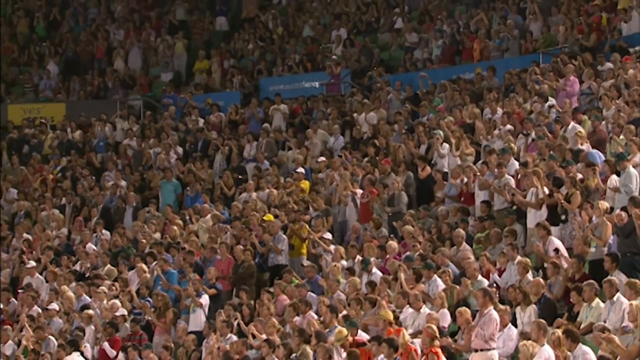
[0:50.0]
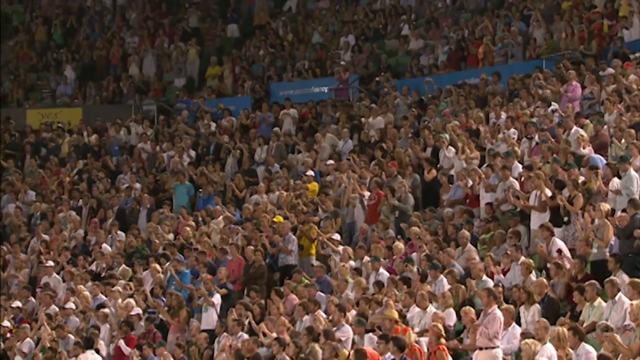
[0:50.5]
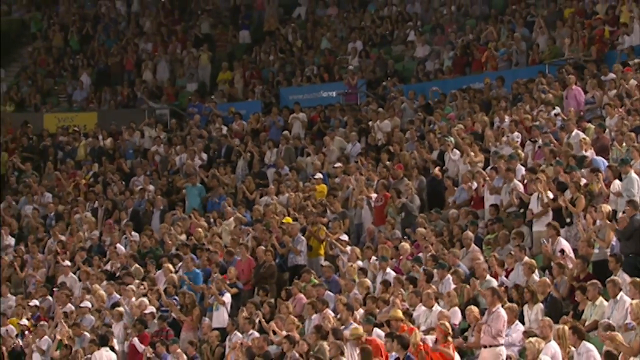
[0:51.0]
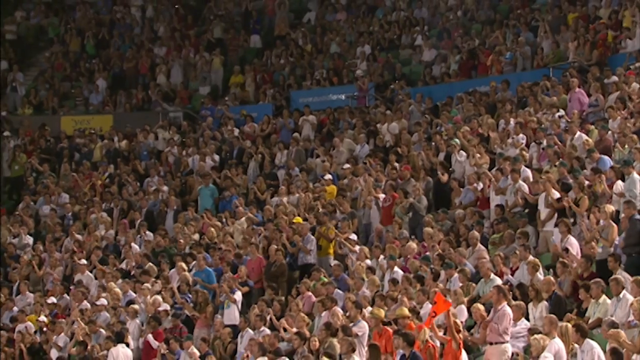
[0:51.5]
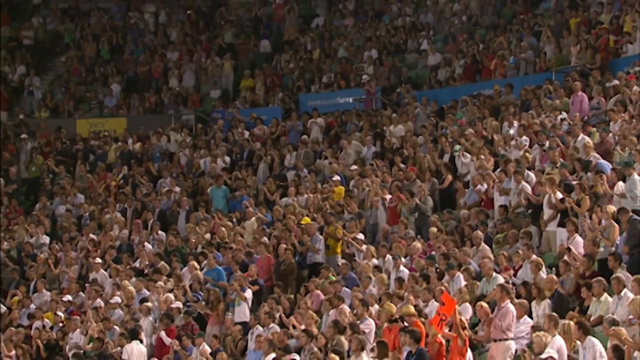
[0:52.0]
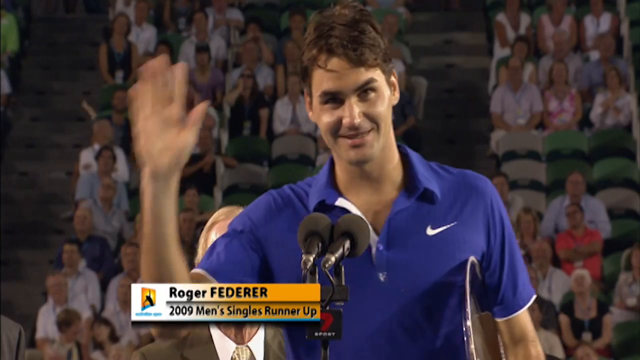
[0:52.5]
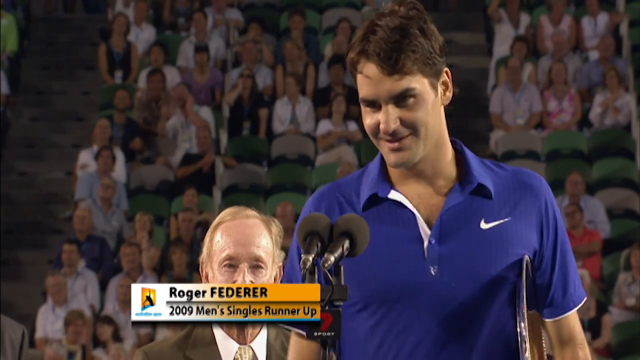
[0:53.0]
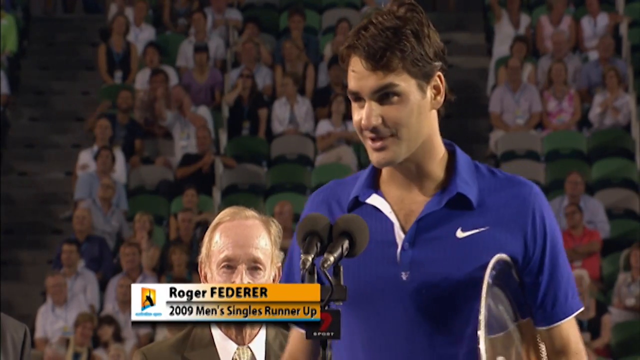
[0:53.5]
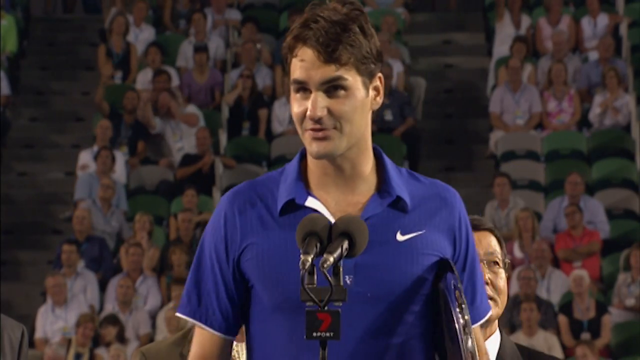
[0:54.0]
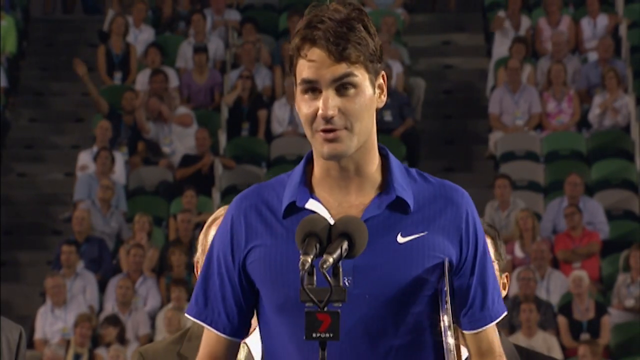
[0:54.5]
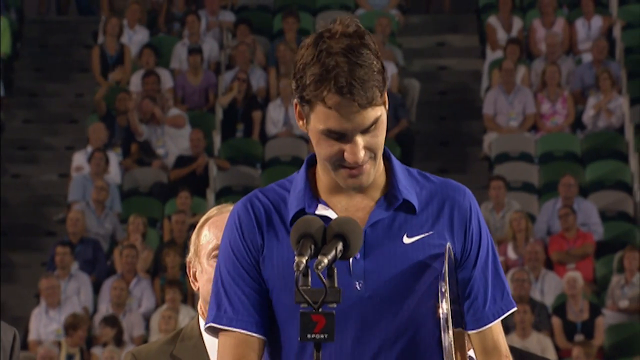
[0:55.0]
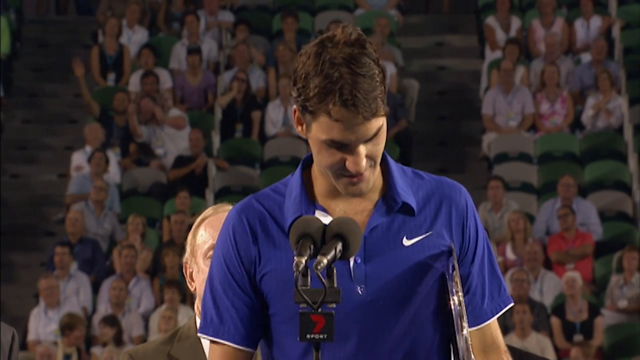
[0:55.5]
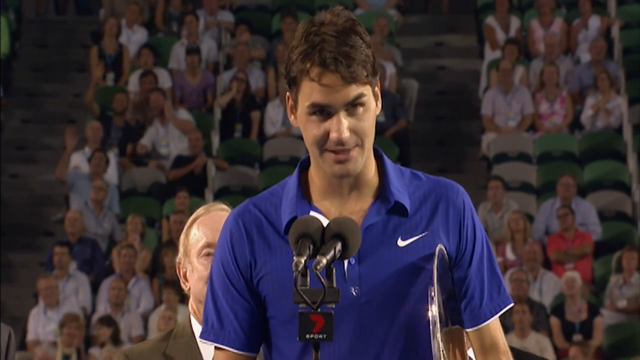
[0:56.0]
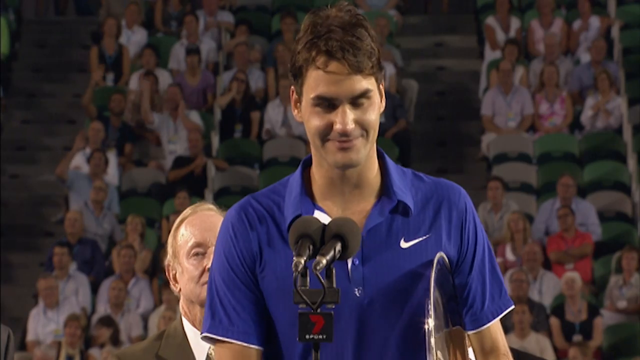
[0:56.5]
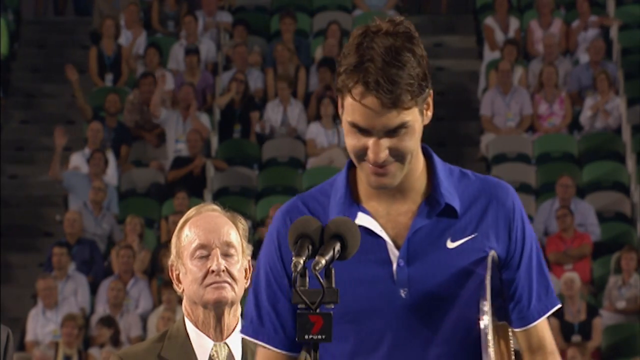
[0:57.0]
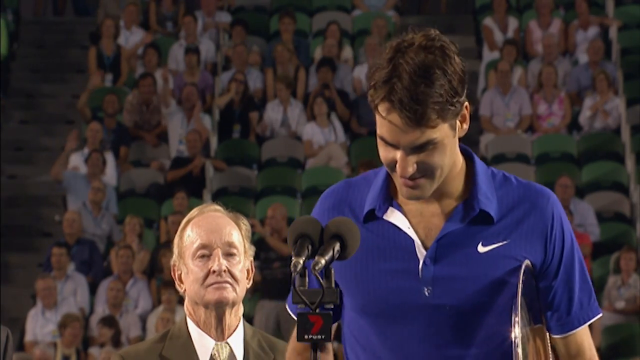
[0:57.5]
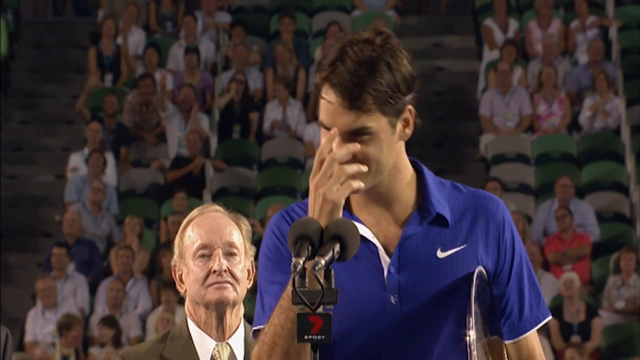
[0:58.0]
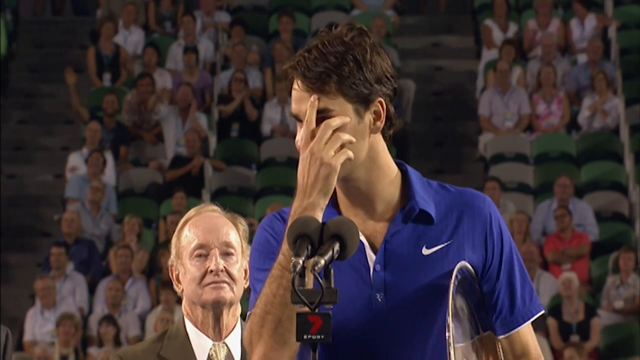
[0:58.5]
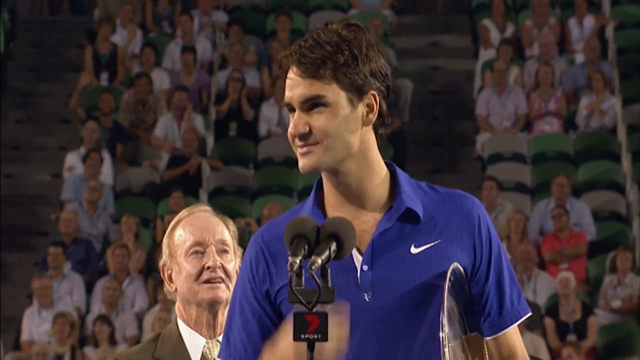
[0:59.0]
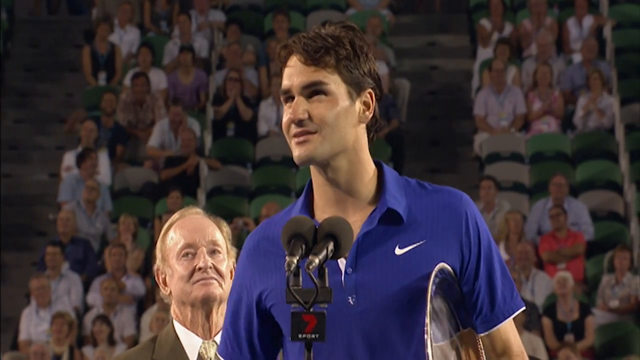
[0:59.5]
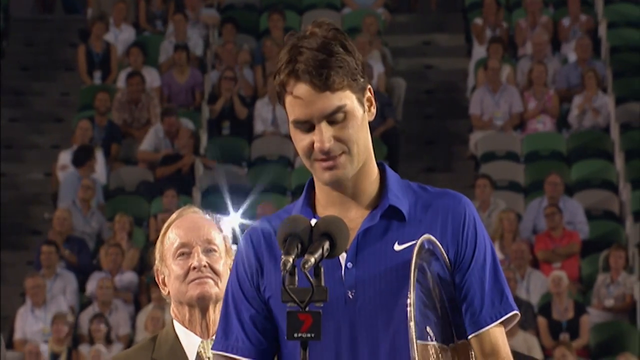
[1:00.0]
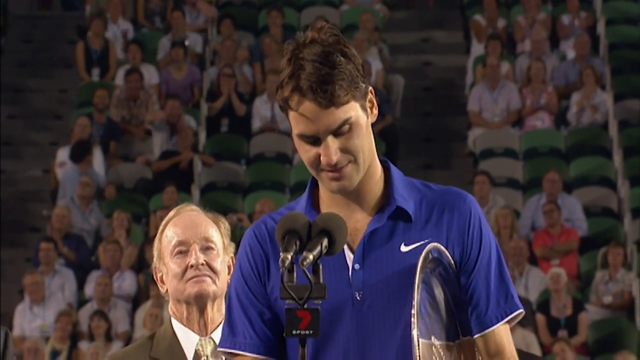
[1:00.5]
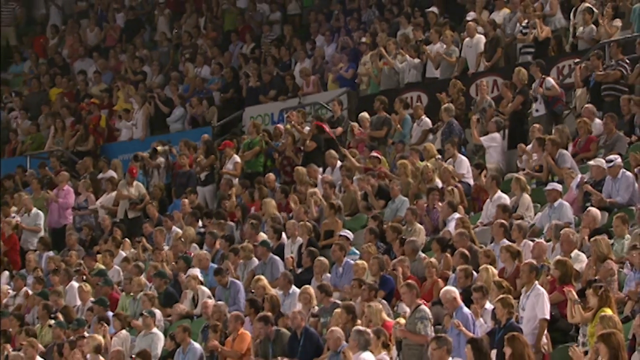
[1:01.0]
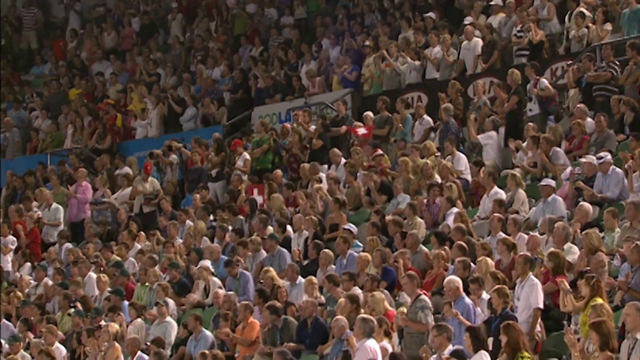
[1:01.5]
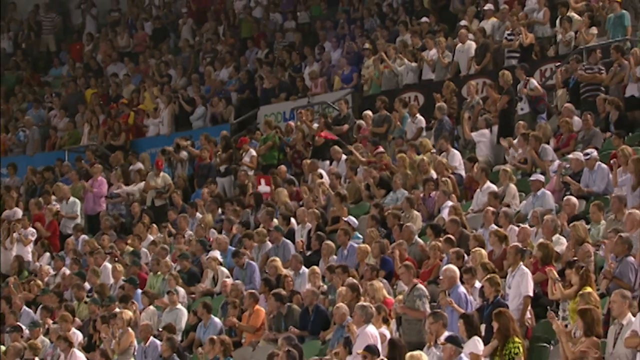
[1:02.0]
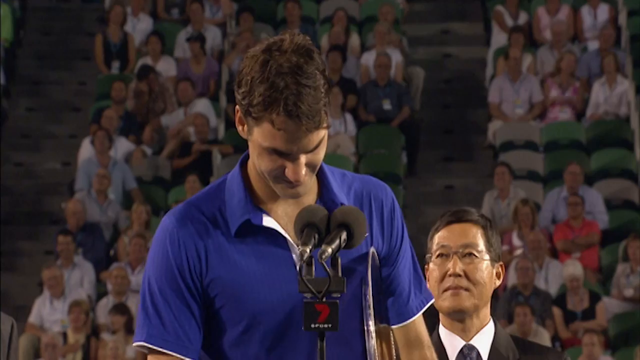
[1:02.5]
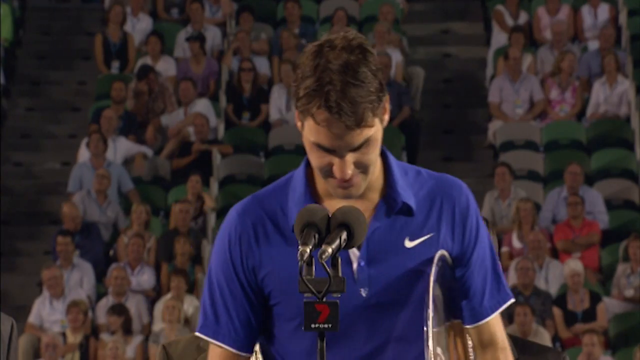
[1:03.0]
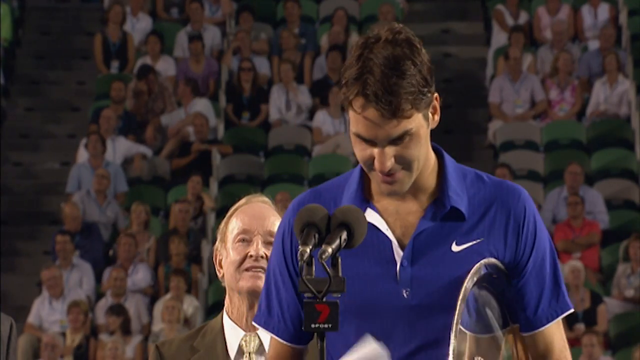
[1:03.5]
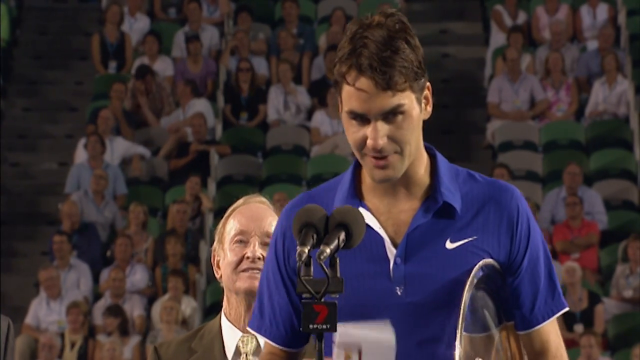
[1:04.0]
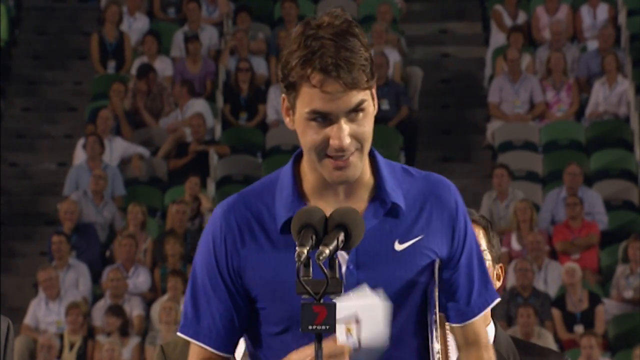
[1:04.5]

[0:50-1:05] The player in blue speaks into the mic while the fans cheer, wave, clap and wave flags. He is smiling and a bit sweaty, holding the plate-shaped trophy under his left armpit, and he wipes his nose as he talks. The managers or directors are behind him. His name appears on the bottom: "Roger Federer". He waves to the fans, who wave back, and the managers smile at him.